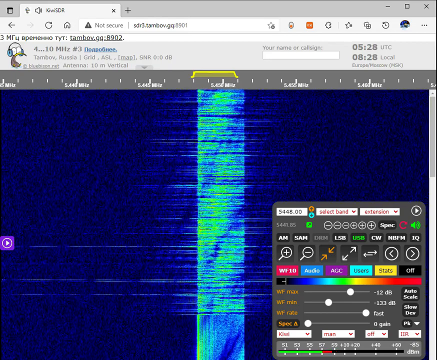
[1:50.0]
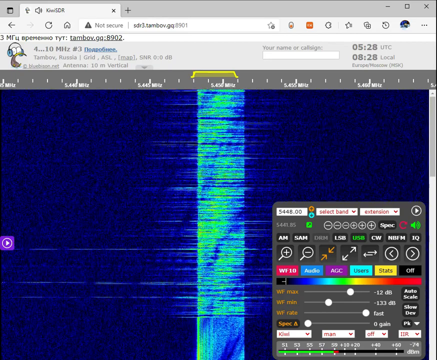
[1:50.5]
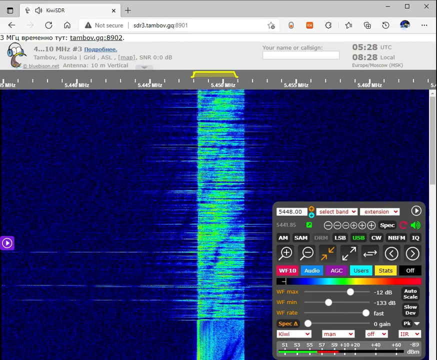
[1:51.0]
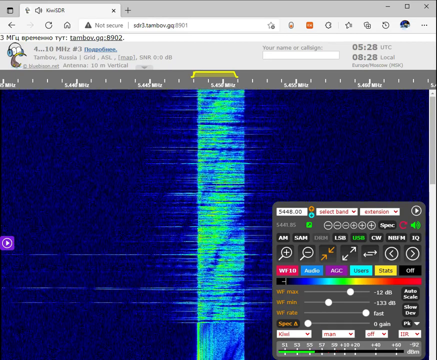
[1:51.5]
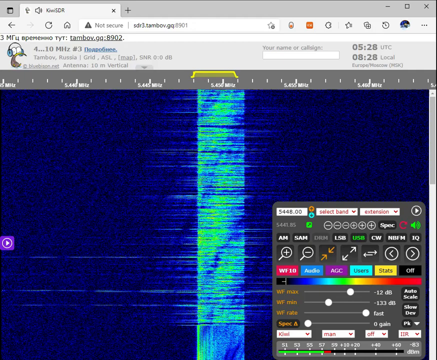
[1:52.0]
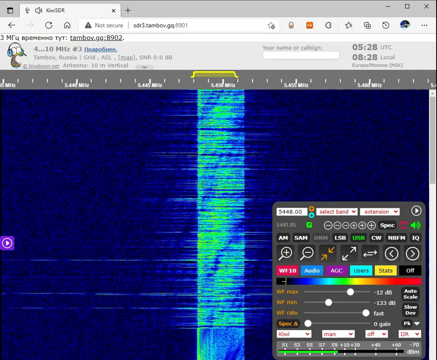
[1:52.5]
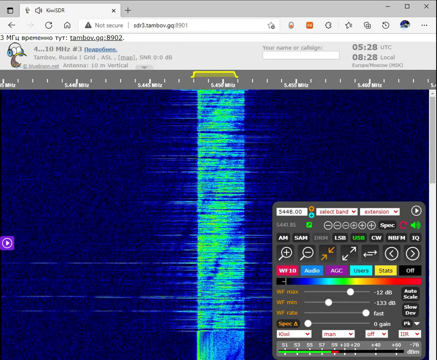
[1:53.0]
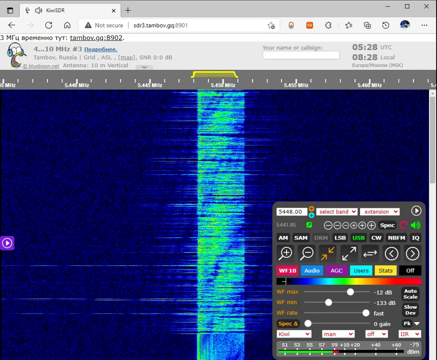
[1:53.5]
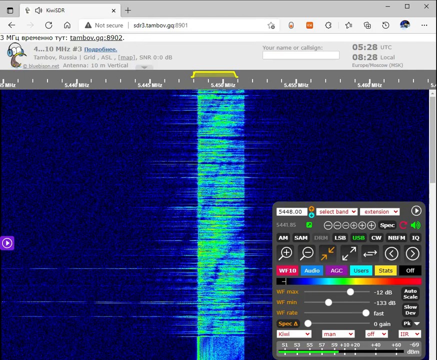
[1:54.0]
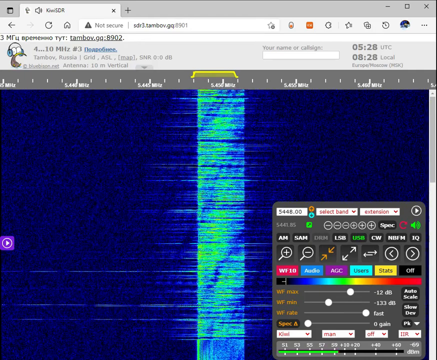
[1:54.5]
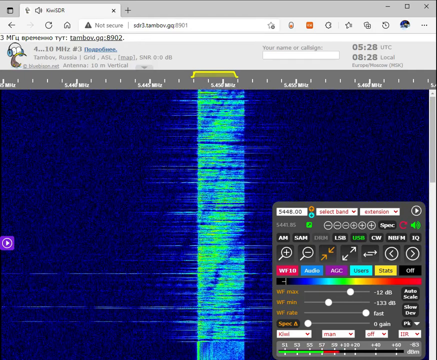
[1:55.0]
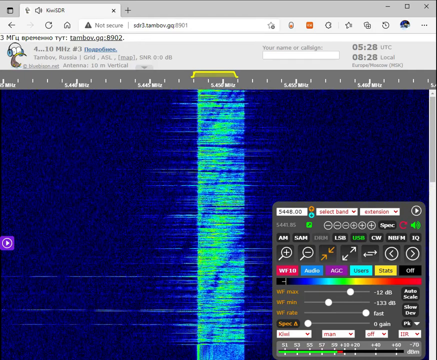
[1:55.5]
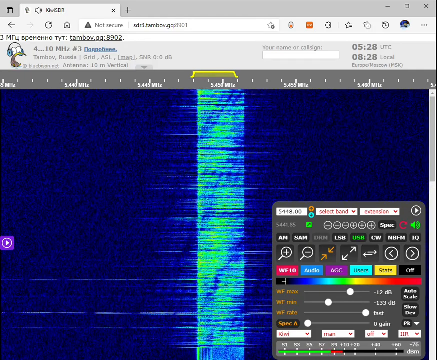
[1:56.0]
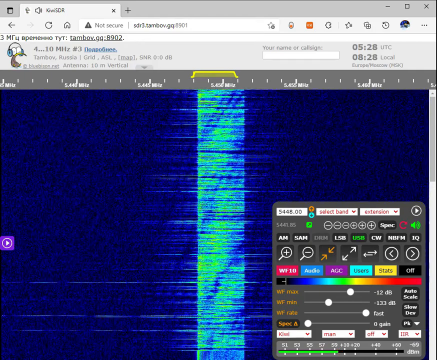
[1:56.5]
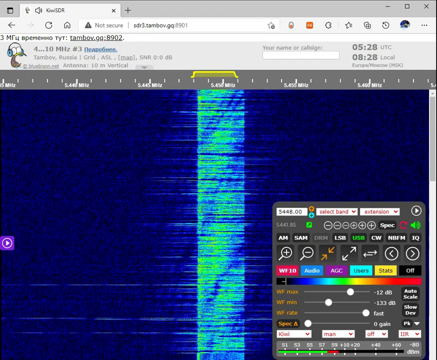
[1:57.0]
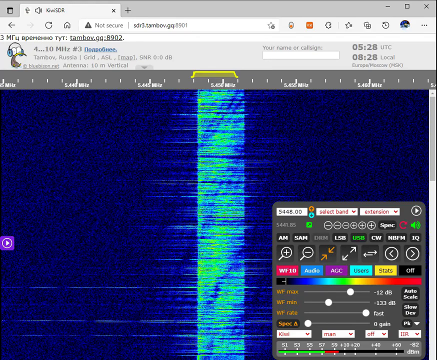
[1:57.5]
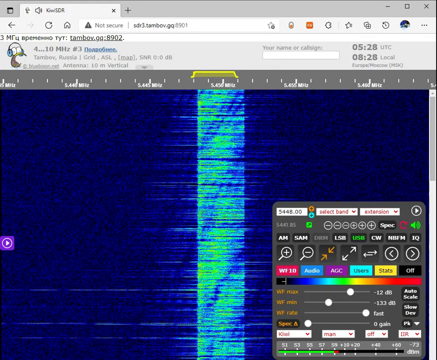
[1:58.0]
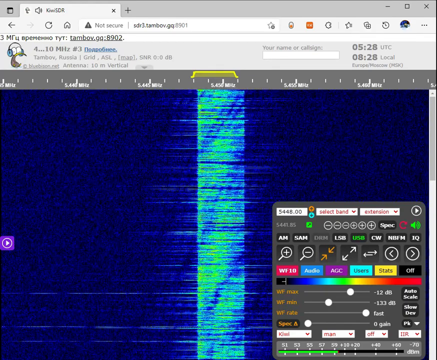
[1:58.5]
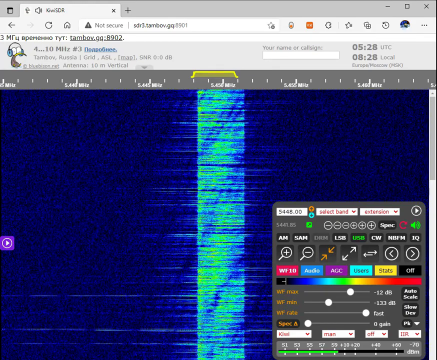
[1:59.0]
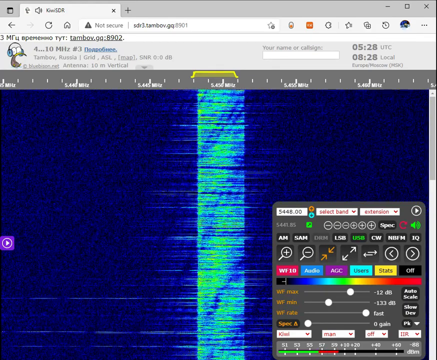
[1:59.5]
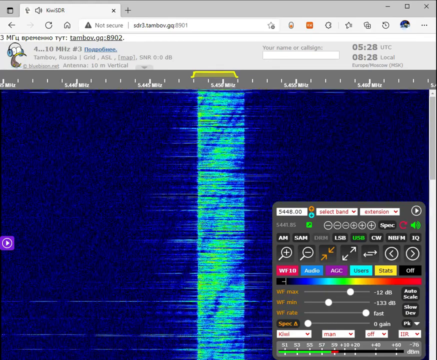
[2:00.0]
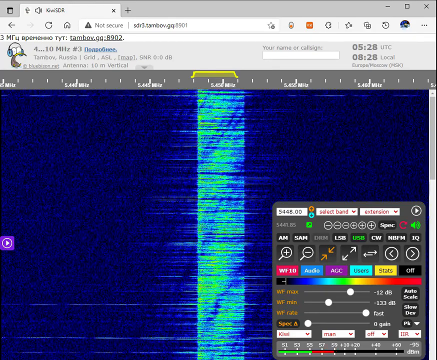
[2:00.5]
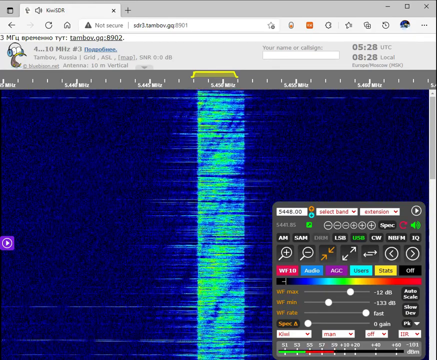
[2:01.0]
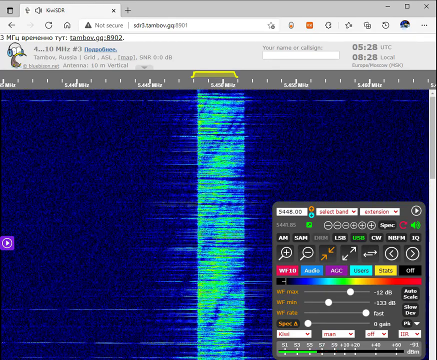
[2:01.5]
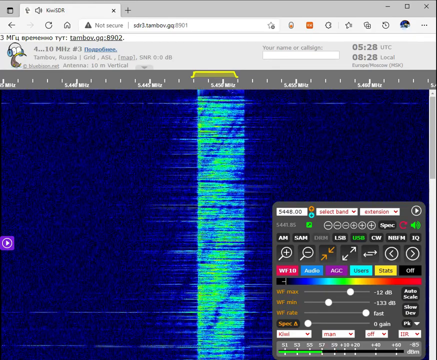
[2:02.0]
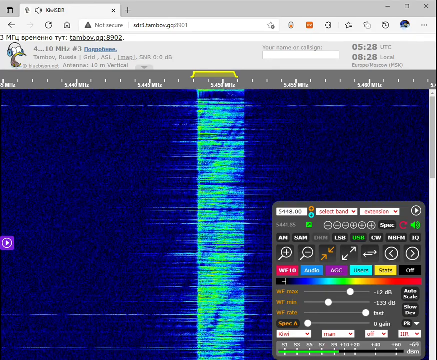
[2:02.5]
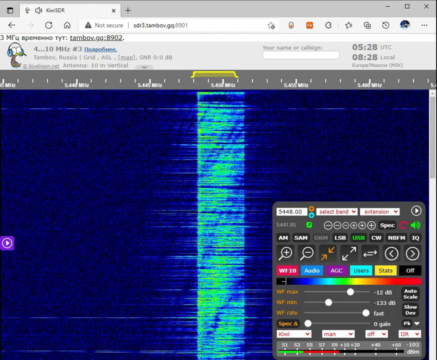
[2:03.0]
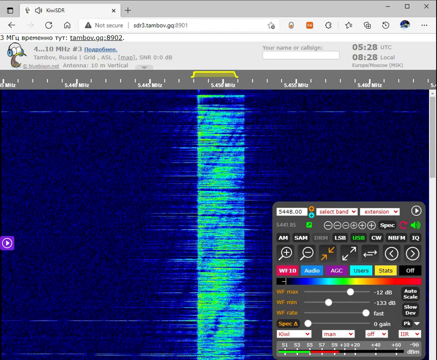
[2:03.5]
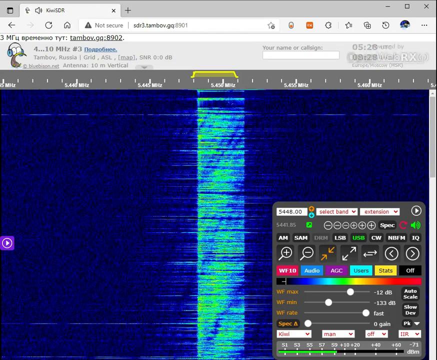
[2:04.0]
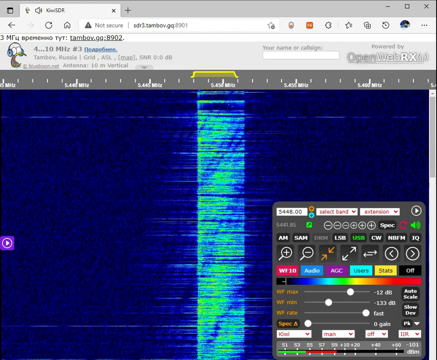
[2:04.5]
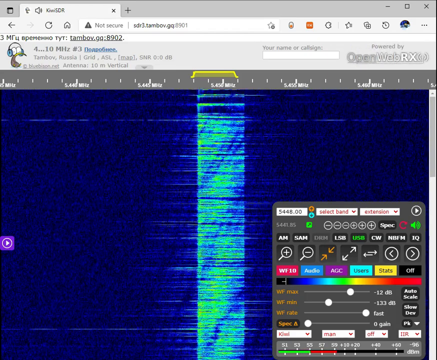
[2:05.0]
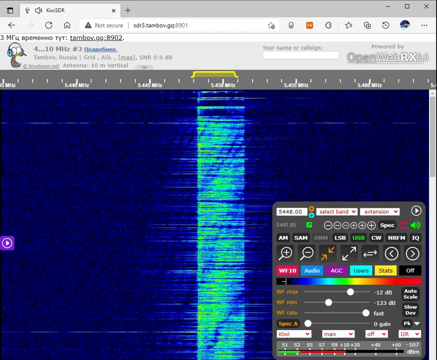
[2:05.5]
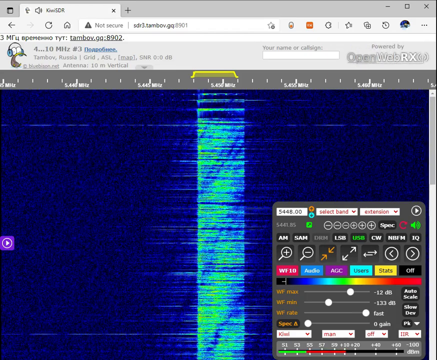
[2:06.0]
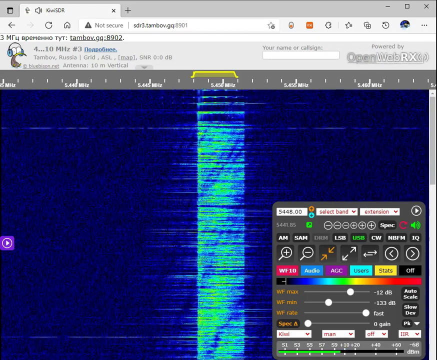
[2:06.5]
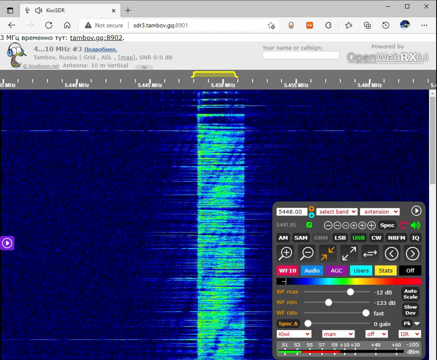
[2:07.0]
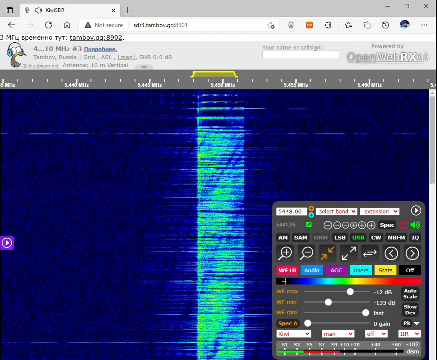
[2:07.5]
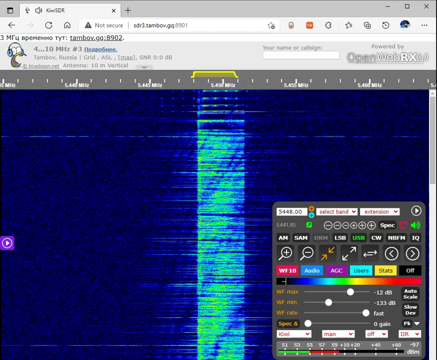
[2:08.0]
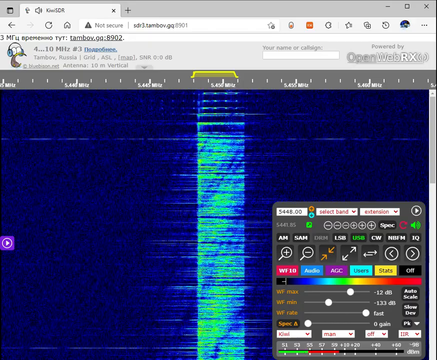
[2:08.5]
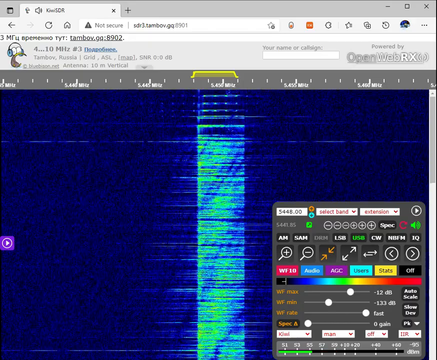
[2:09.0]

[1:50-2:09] The screen for this radio station out of Tambov, Russia, shows a thick band of yellow and lighter green on a blue background, panning as it moves down while new information comes in from the top. The wispier lines to the right of the band become more diminished but are still there. A change seems to be coming along at the top, but it stops before reaching the top. The text on screen appears to be mostly in Russian.